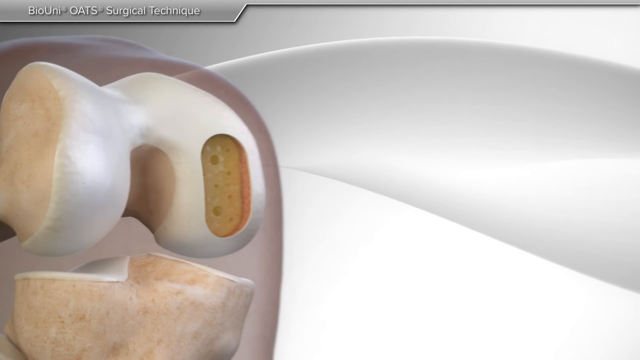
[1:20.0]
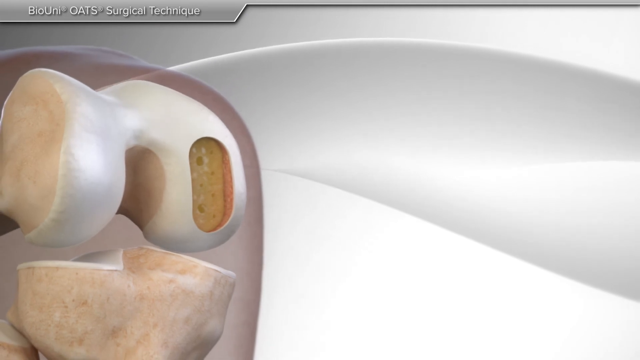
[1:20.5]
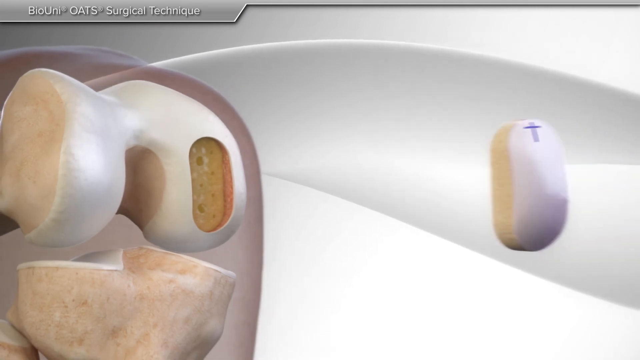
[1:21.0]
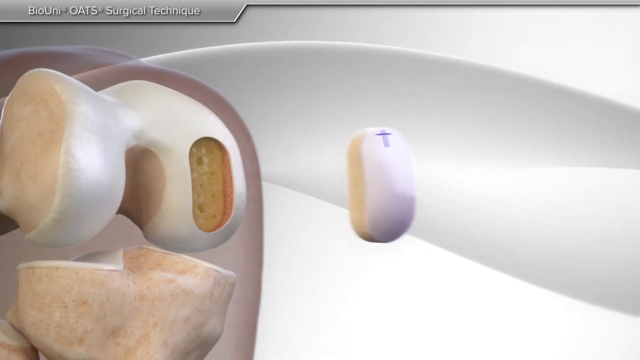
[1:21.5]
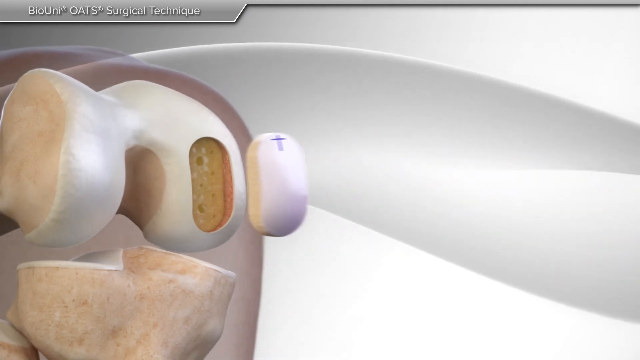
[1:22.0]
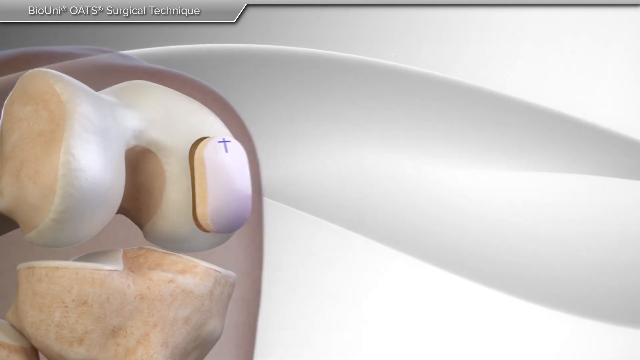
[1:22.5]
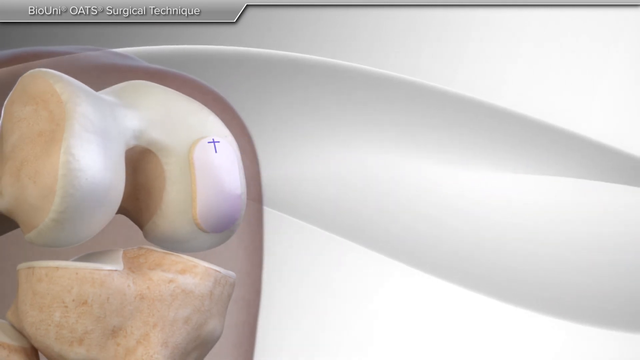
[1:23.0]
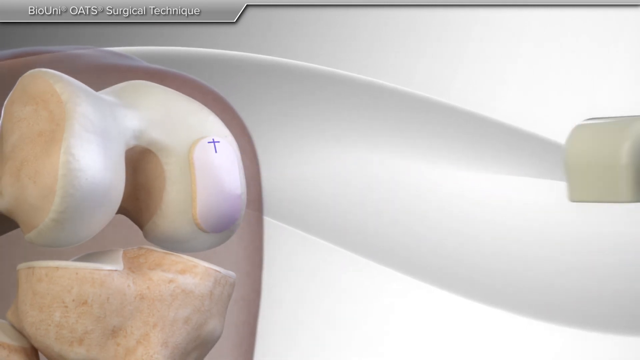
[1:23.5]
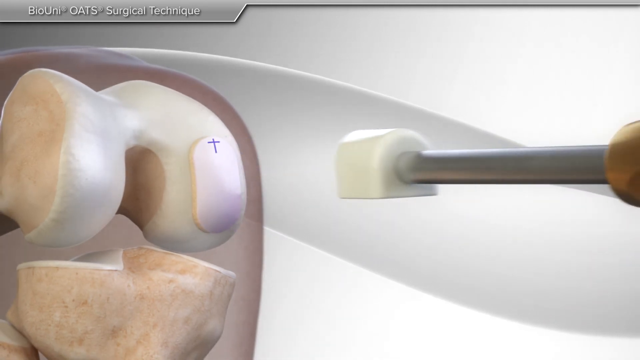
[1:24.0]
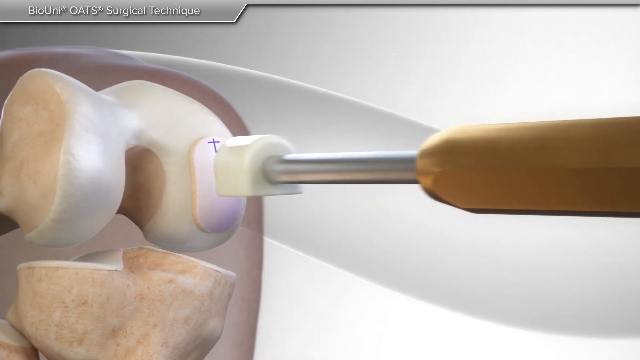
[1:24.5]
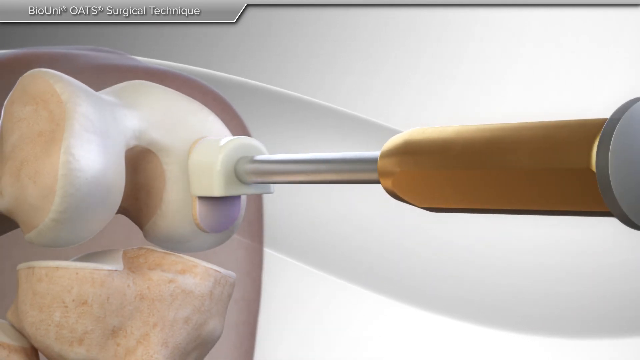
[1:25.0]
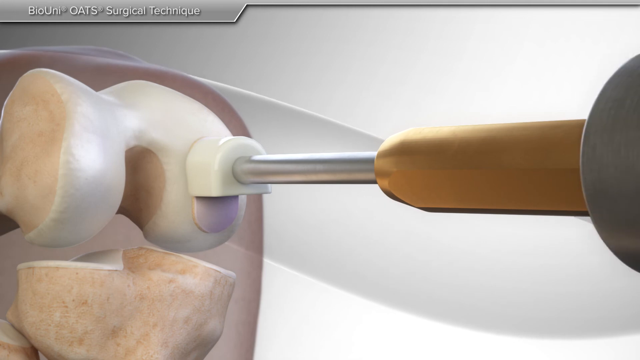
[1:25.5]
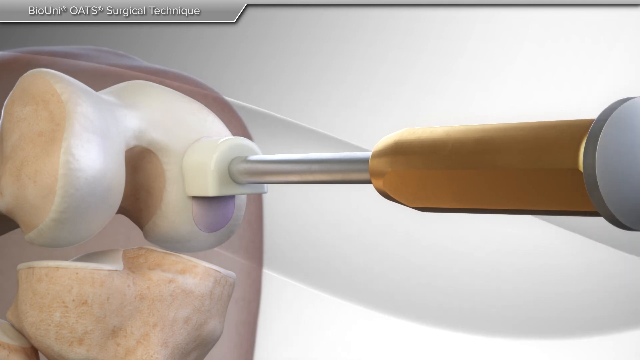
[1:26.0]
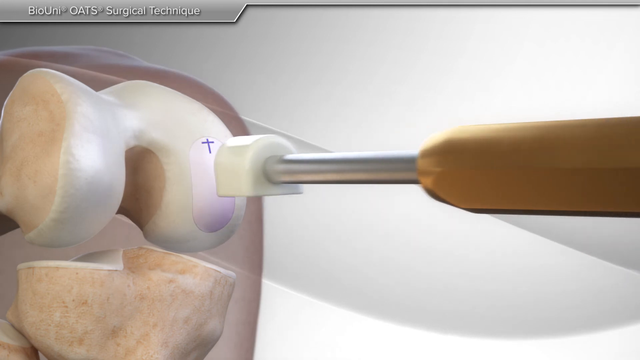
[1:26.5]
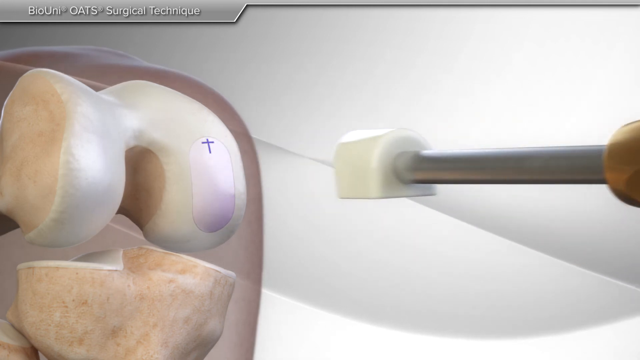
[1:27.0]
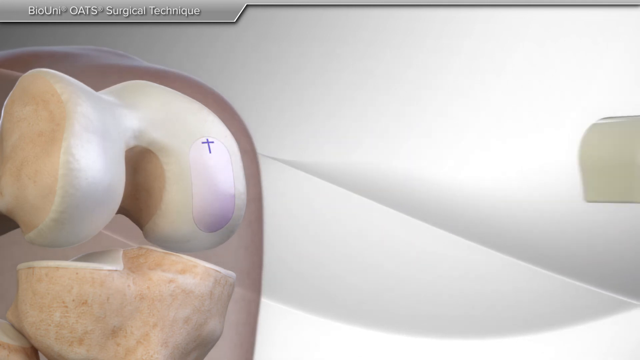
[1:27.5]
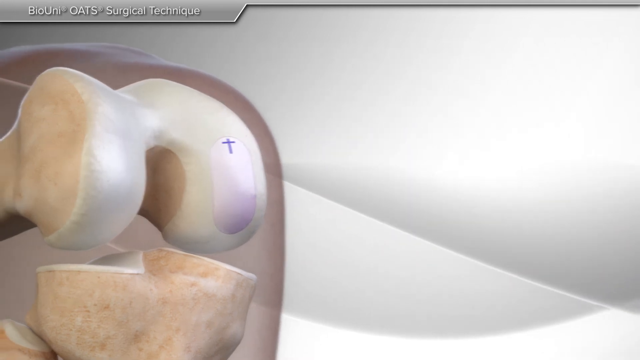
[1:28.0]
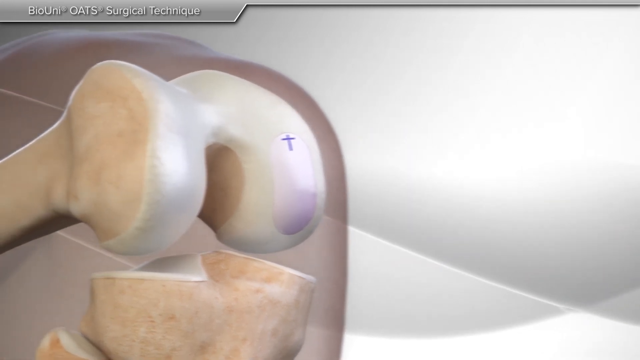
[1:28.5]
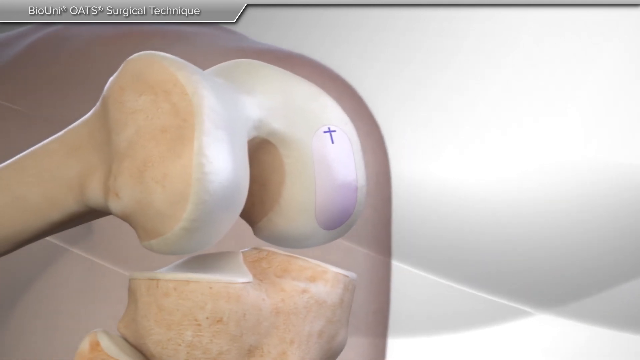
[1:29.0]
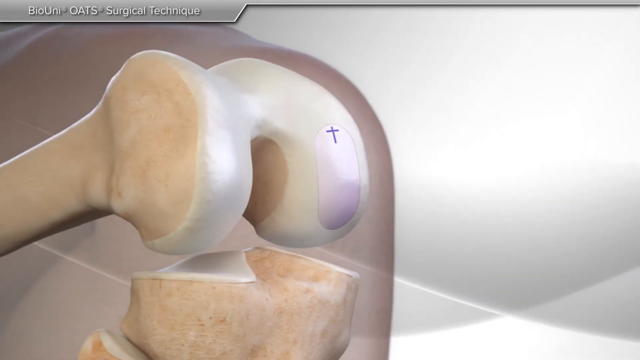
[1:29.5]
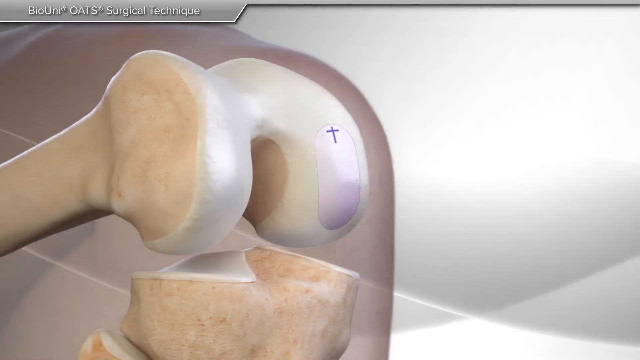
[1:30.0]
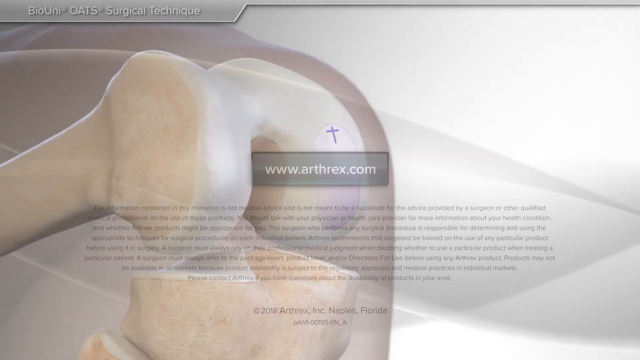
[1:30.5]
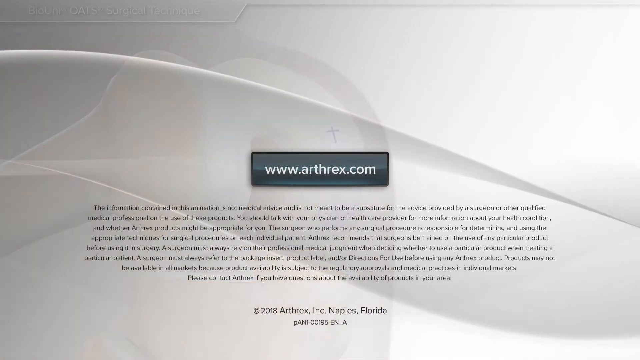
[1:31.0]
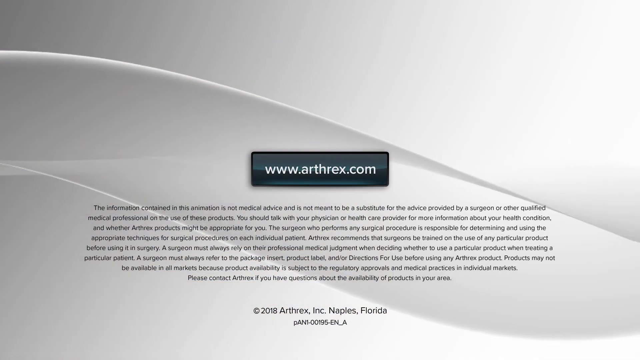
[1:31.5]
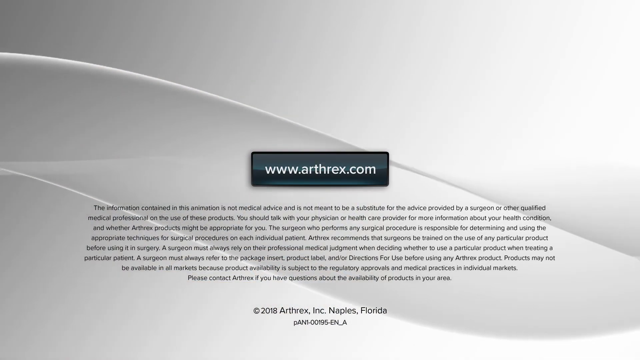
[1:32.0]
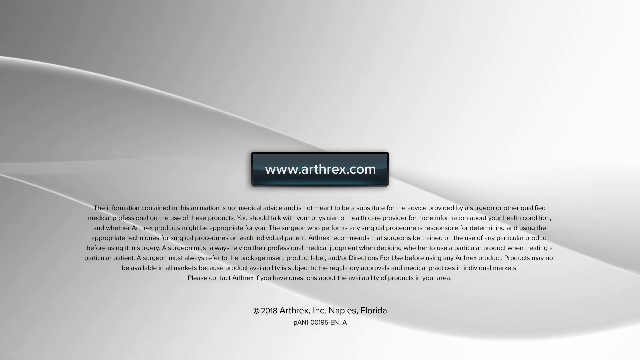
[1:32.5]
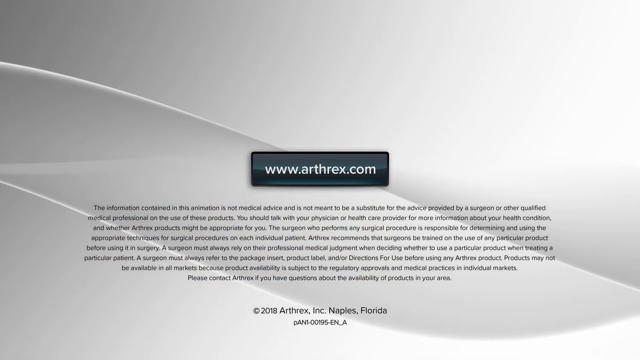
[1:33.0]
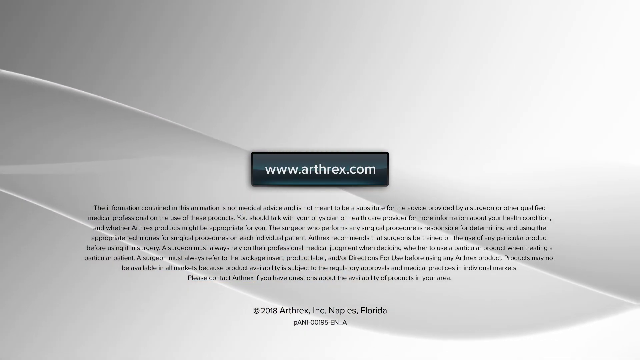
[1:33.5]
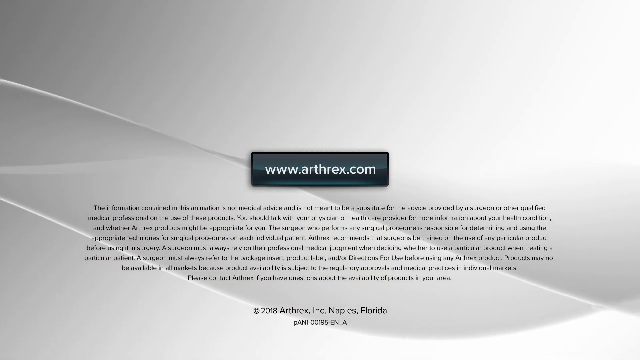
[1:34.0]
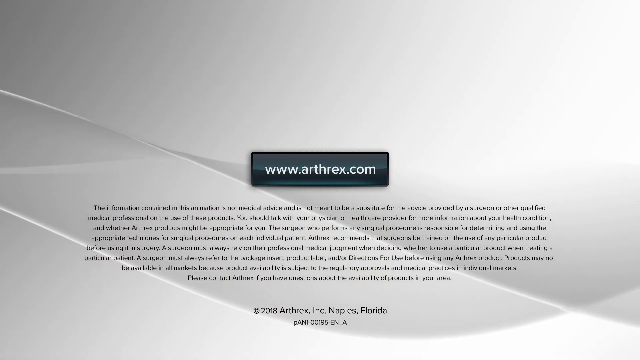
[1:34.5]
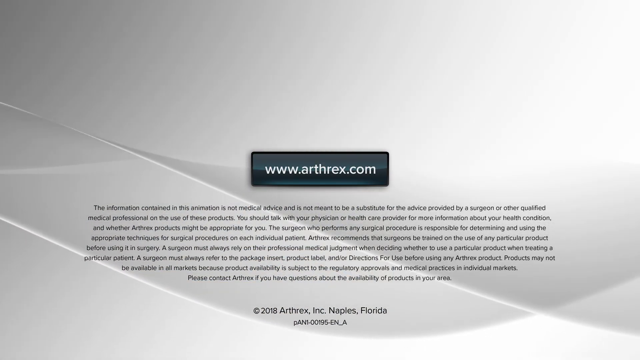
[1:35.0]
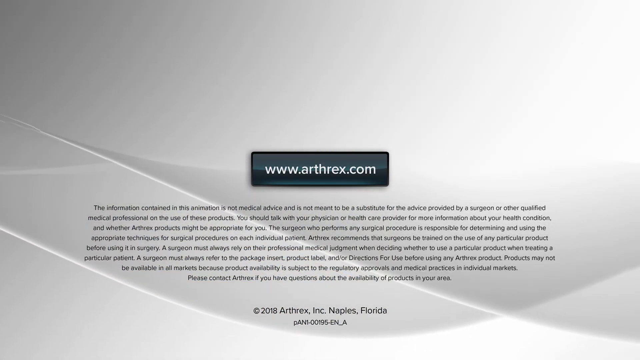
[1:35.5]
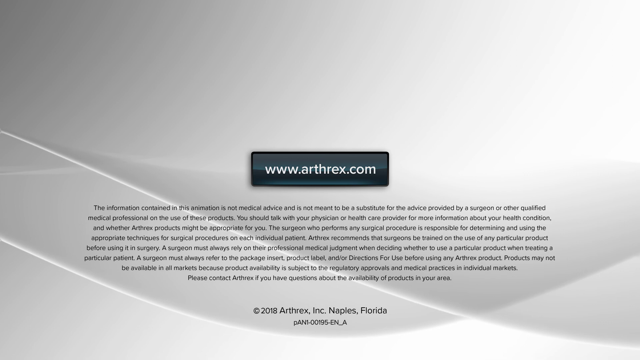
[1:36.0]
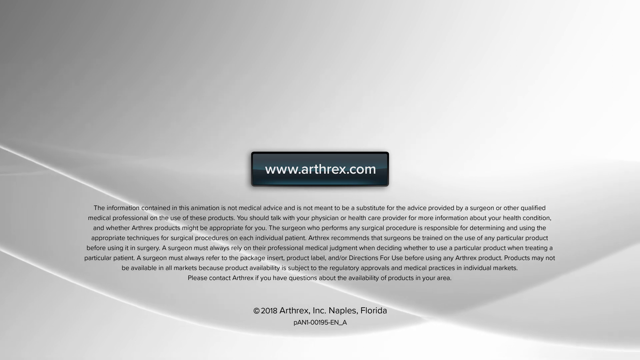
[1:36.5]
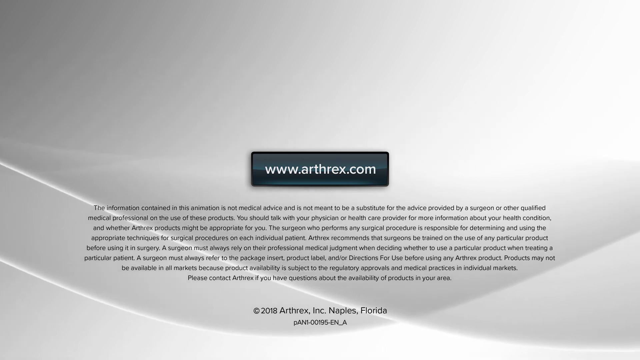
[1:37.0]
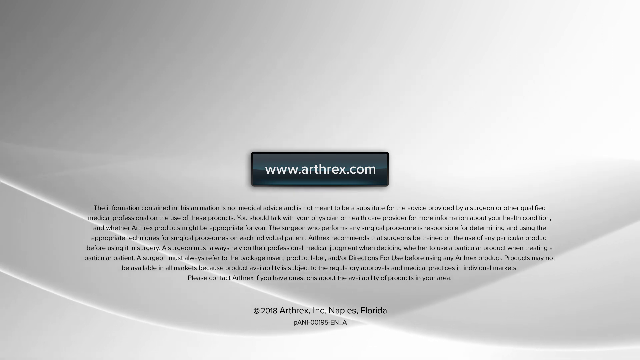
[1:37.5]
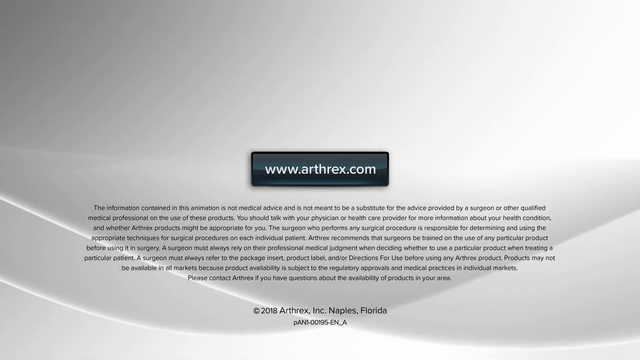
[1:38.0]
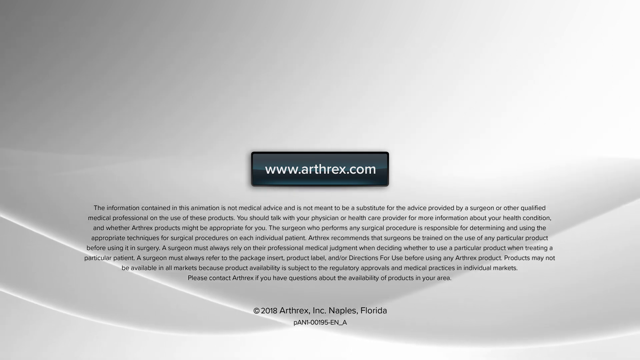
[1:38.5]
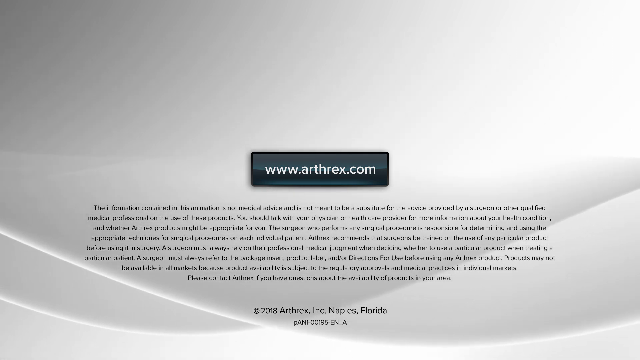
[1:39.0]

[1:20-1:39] The diagram shows the bent knee joint that had the damage on the left-hand side of the joint. The damaged area has been removed, leaving a lozenge-shaped hole, with a number of holes drilled into it and a yellow liquid spread over it. A lozenge shape of donor tissue, the section prepared with the blue cross at the top of the shape, is inserted into the lozenge hole in the original kneecap. It glides into place but sticks out slightly. Another tool with a flat bottom and a handle comes along and depresses the donor tissue so that it is flush with the original bone. The fit is perfect, with no gap between the original bone and the donor tissue, and this is then shown in close-up. The screen then changes to a title page for "www.arthrex.com" in a black box.